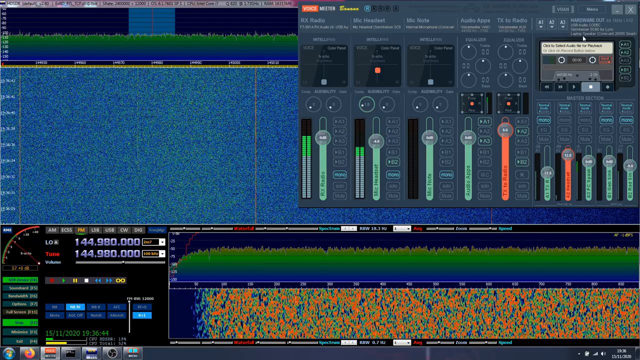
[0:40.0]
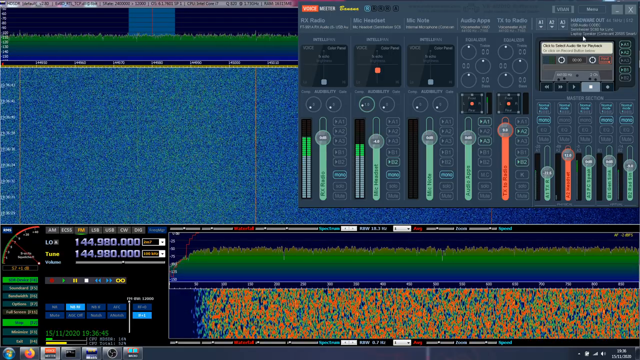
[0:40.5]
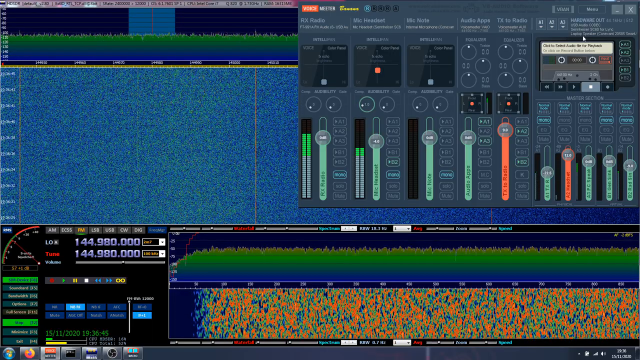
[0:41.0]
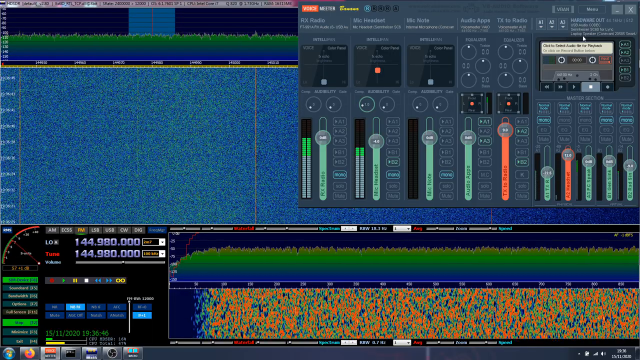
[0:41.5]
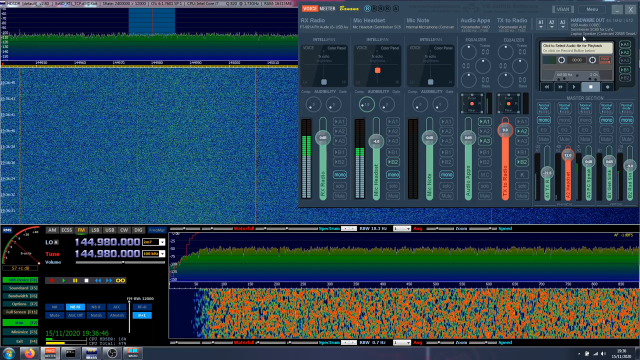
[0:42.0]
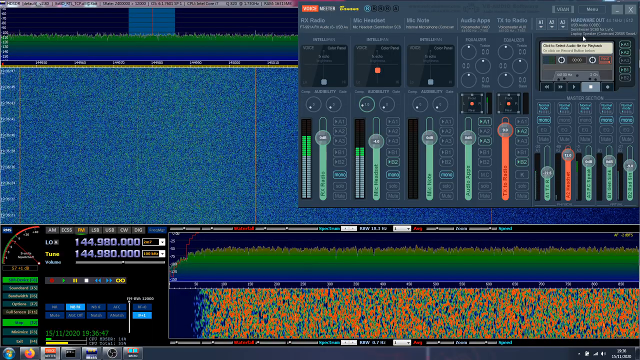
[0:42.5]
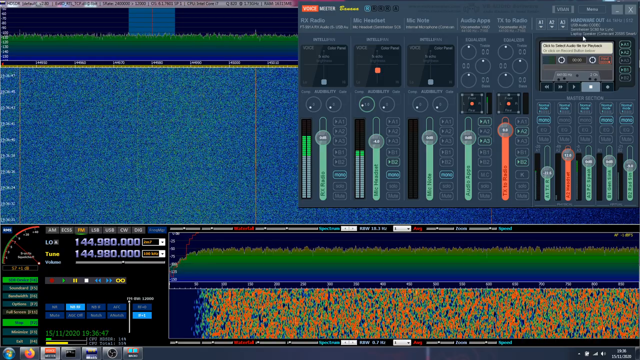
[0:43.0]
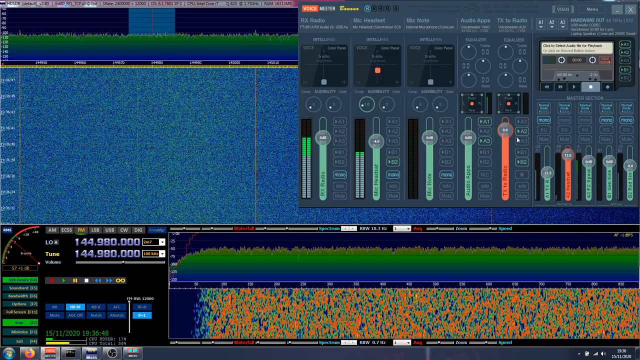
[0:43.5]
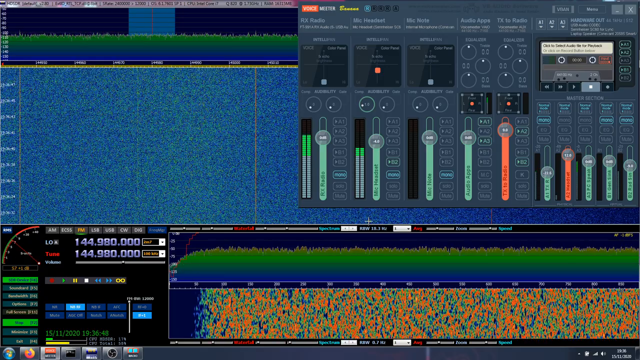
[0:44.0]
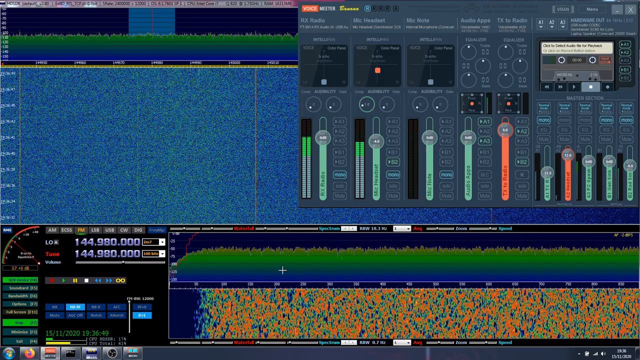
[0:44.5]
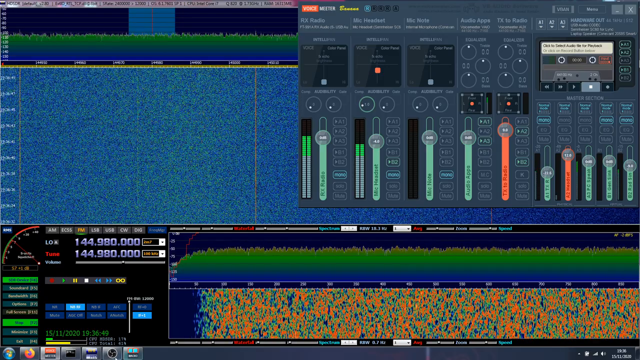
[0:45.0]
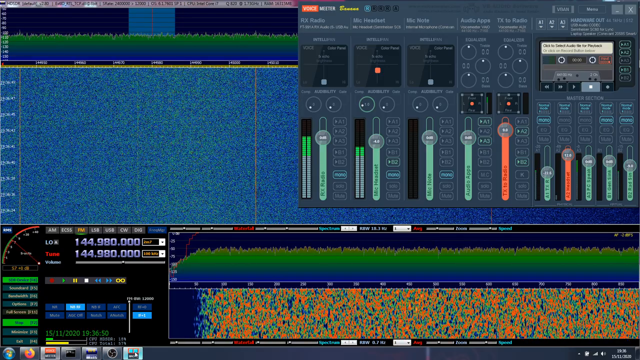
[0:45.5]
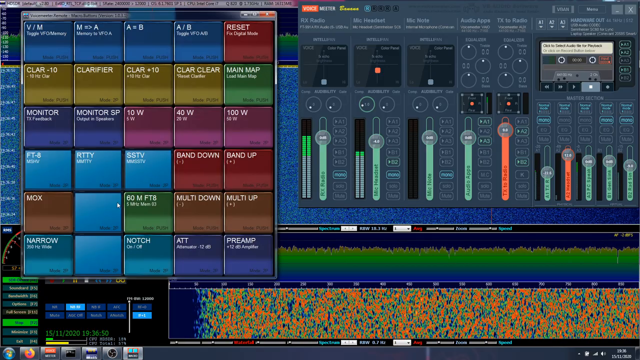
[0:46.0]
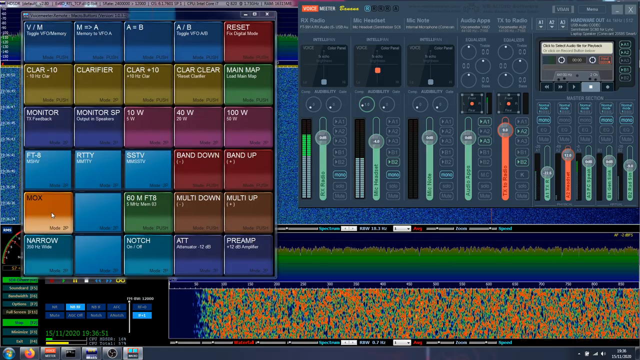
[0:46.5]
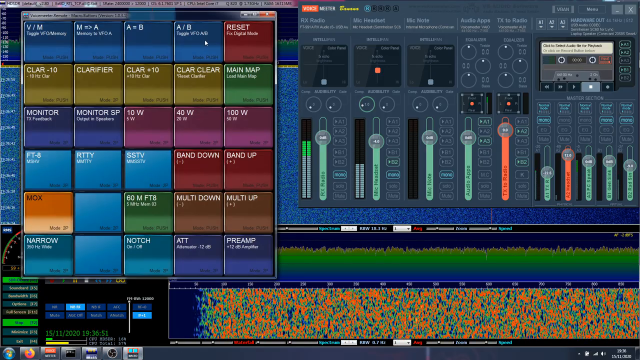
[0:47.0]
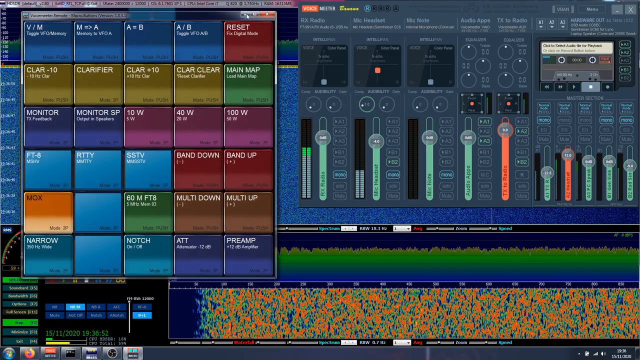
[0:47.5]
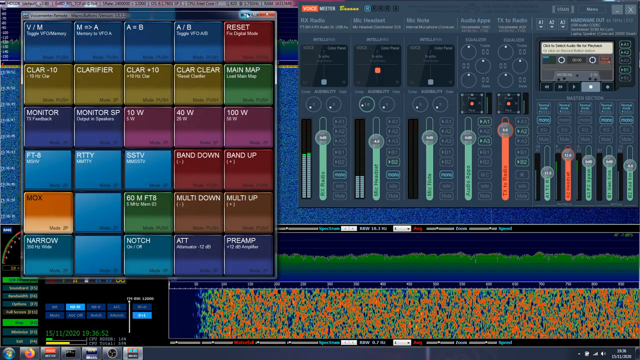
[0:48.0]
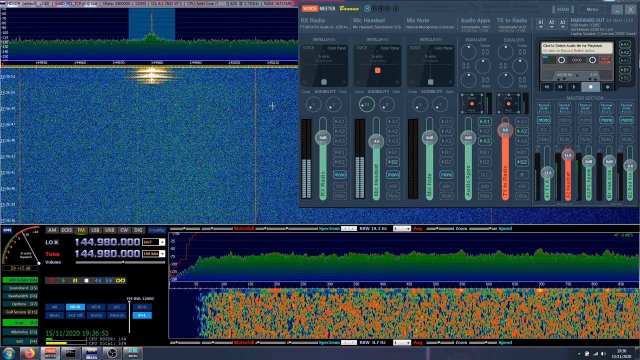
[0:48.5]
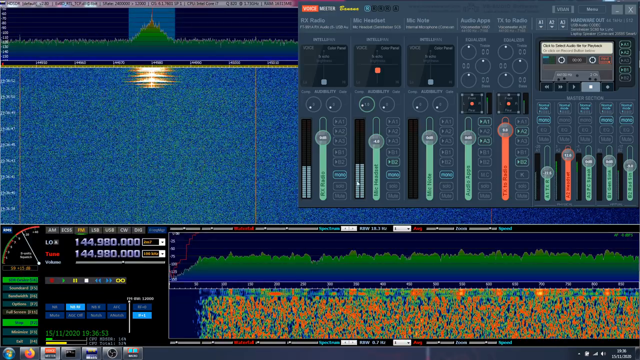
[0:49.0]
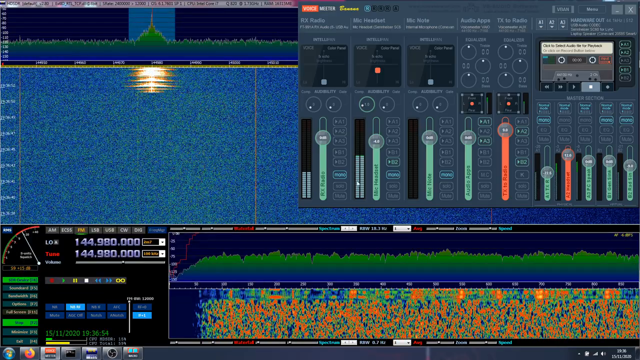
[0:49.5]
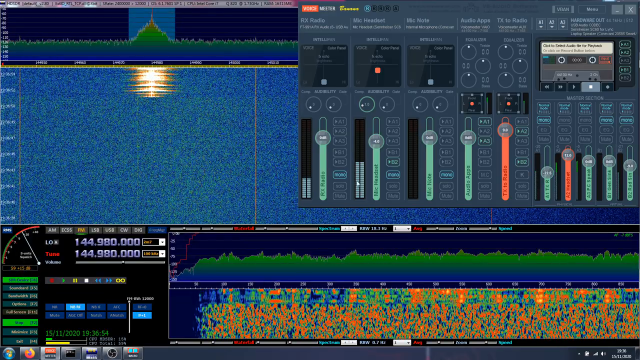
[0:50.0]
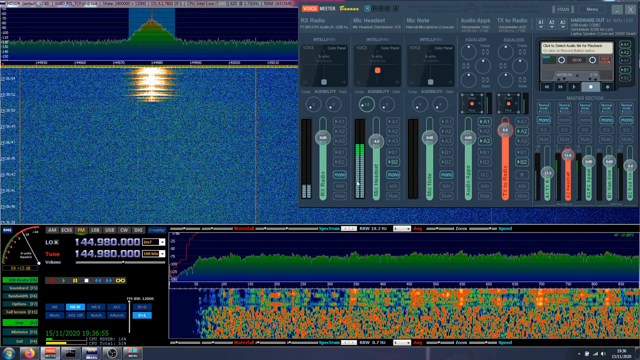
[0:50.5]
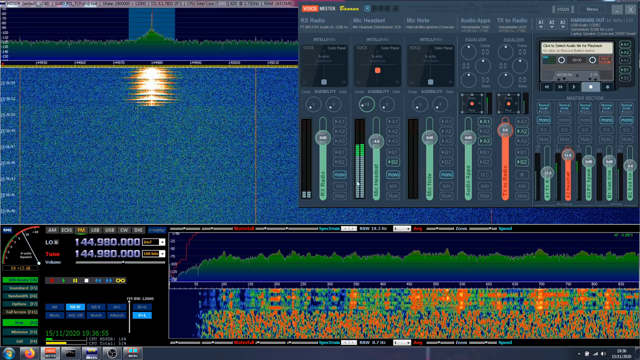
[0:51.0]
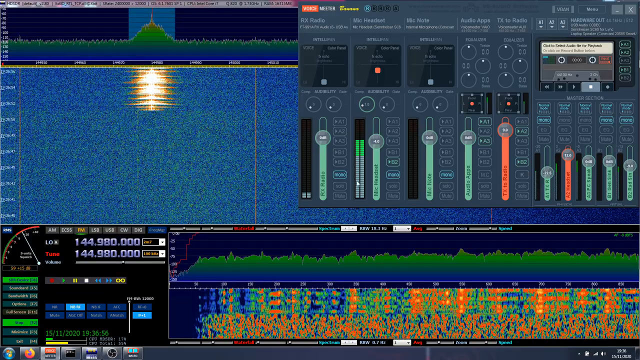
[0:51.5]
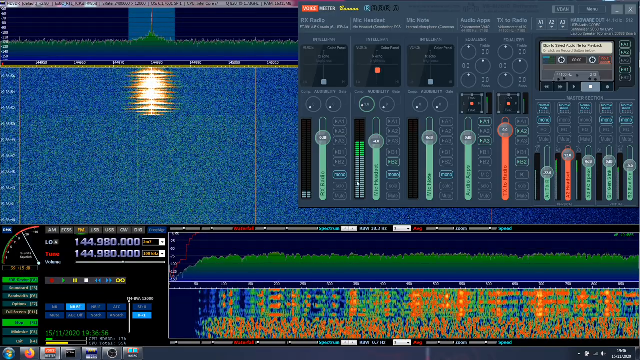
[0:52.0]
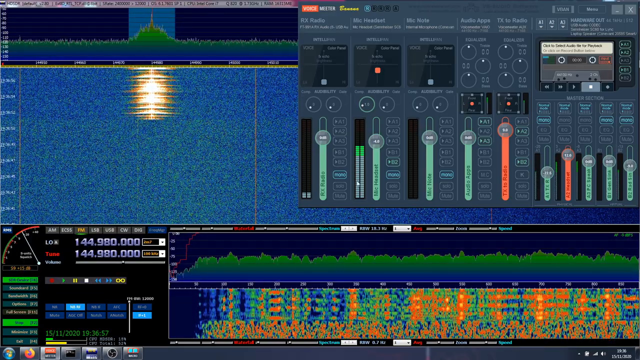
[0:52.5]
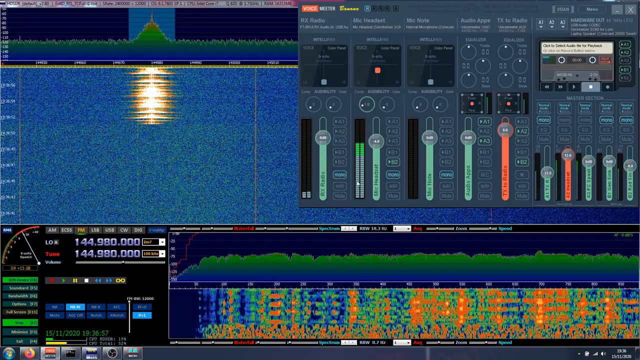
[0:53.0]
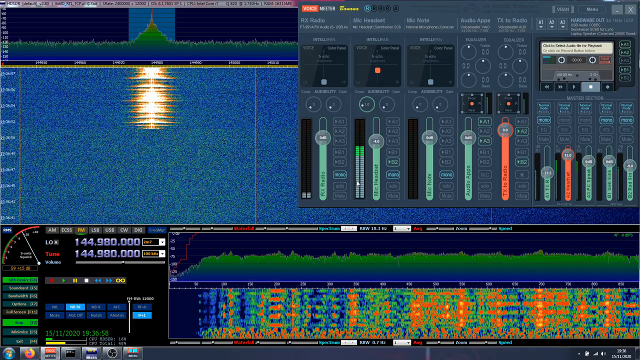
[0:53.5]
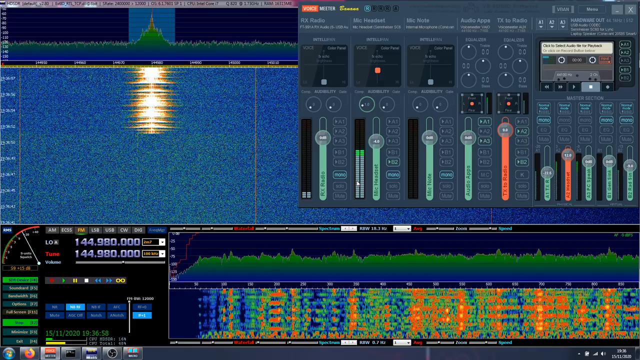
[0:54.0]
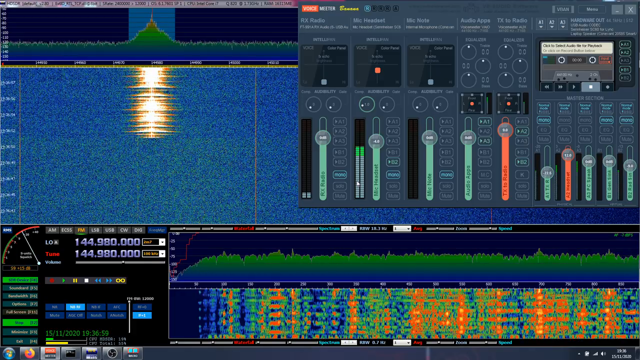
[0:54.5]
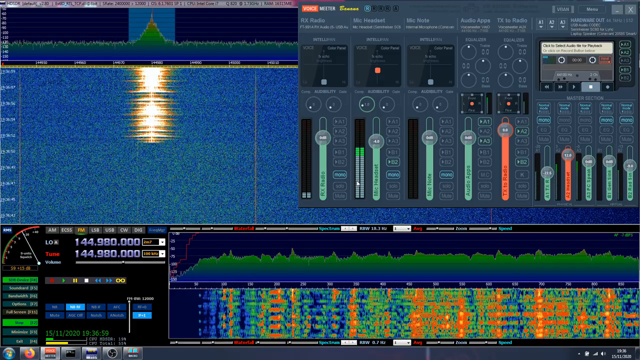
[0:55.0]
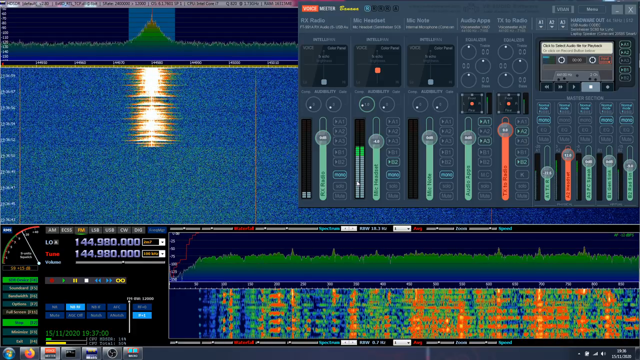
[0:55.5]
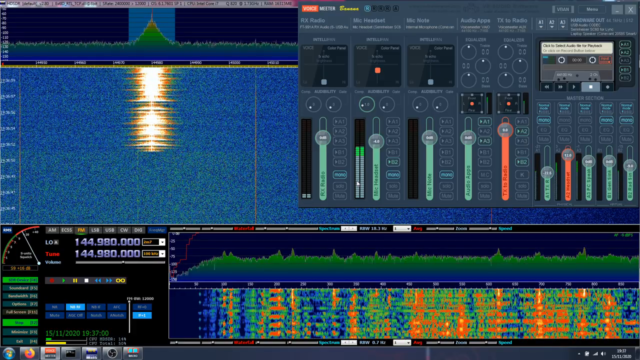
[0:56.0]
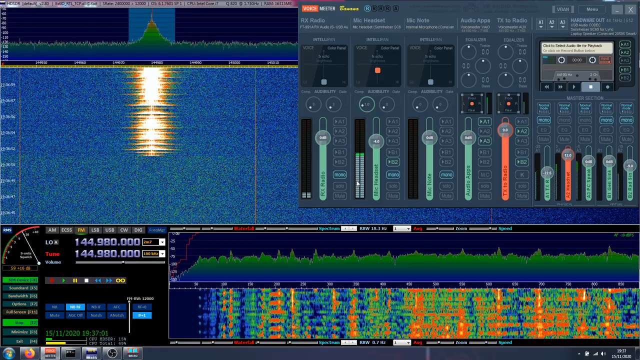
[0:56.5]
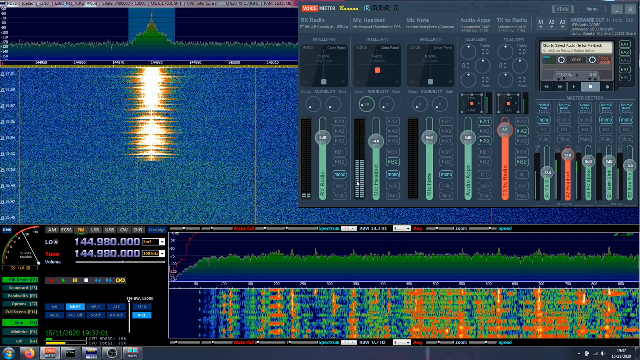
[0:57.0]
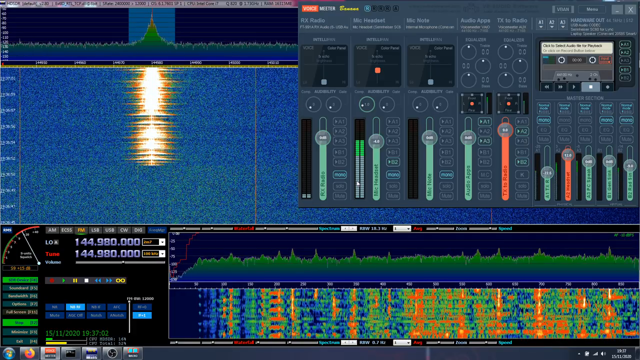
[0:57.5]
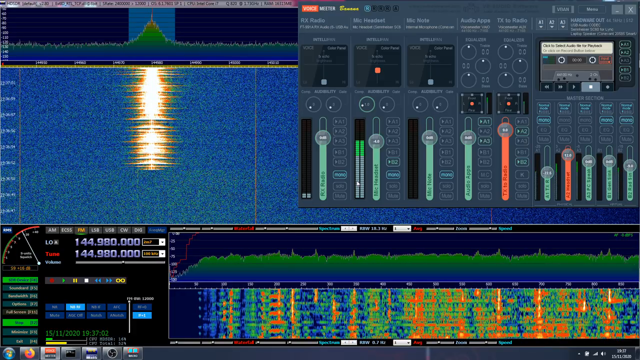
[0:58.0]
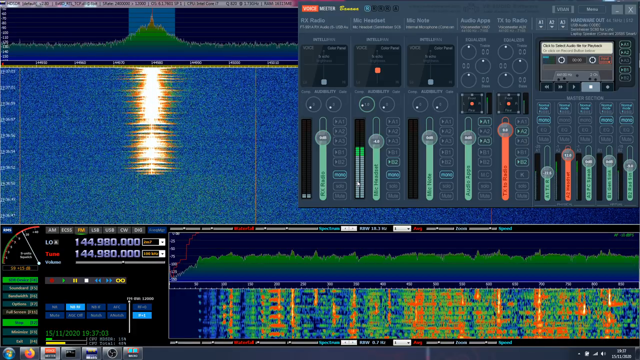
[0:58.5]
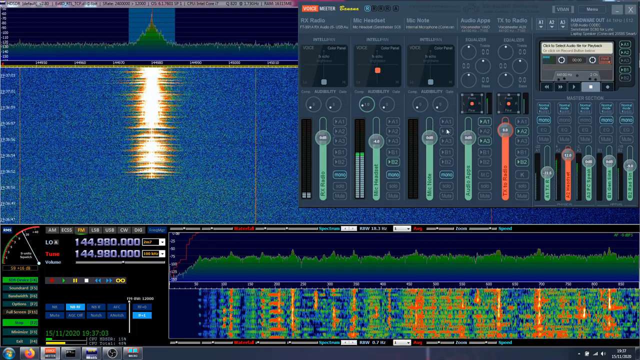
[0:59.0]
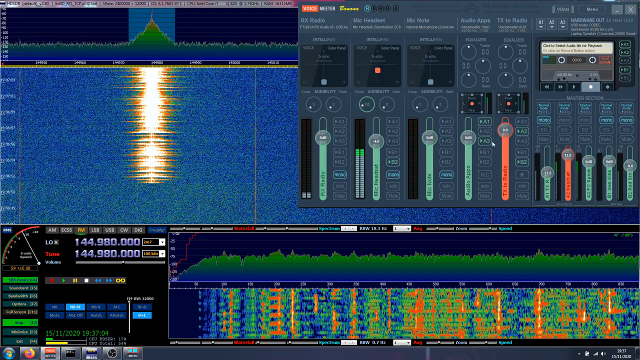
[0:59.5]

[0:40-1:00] The name of the digital audio workstation is not visible; the title bar seems to be cut off. The creator accesses a function in the bottom left portion of the screen, which seems to insert a new audio source into the project. The mixer lists the audio sources "RX radio", "mic headset" and "mic note", and apparently only RX radio and mic headset are playing anything. The virtual cassette in the cassette deck appears to be stopped, and the mouse pointer hovers over it; the cassette seems to hold some audio source or song.